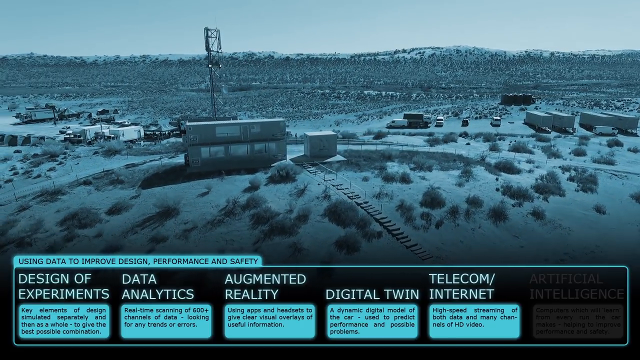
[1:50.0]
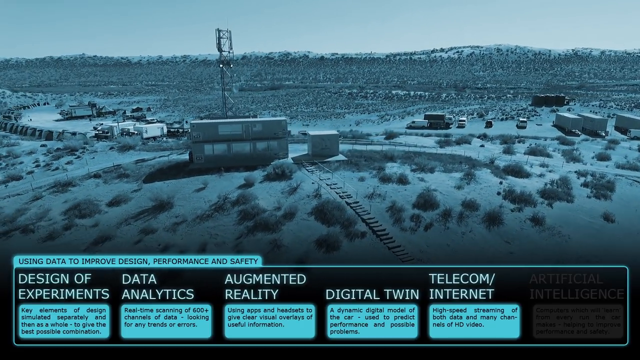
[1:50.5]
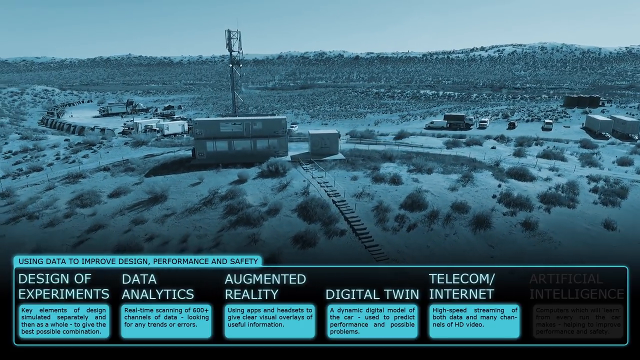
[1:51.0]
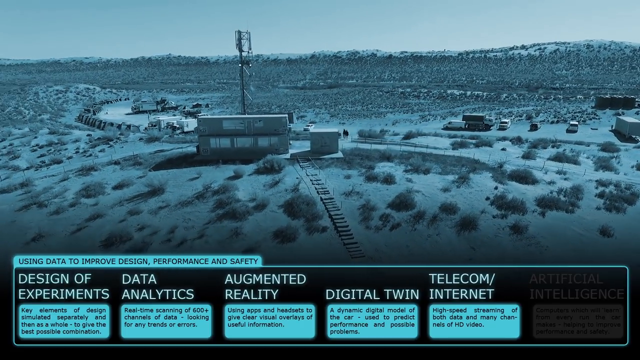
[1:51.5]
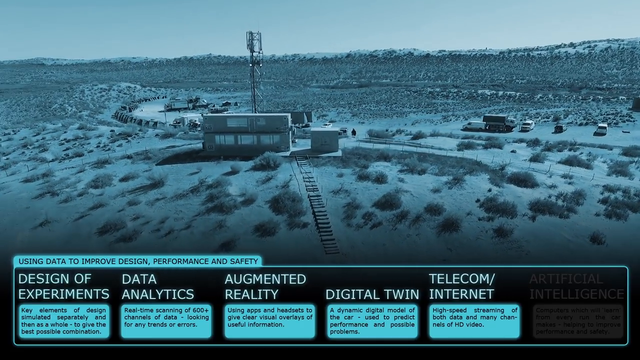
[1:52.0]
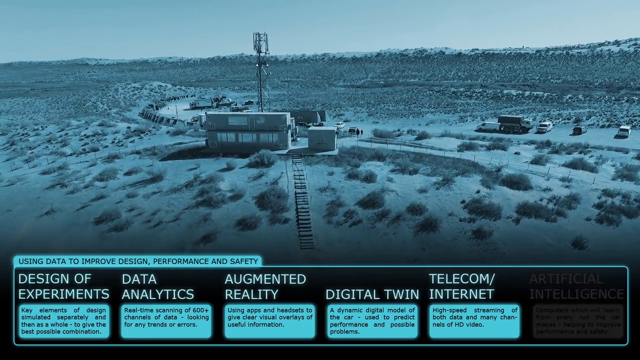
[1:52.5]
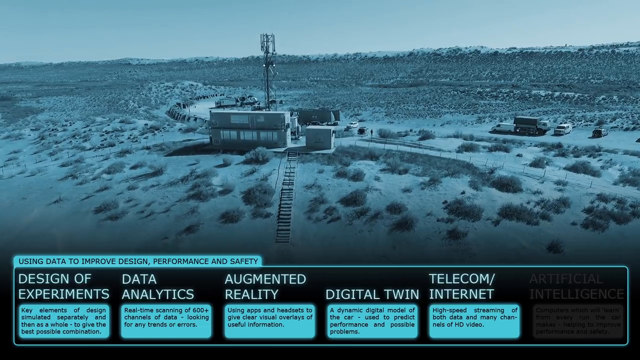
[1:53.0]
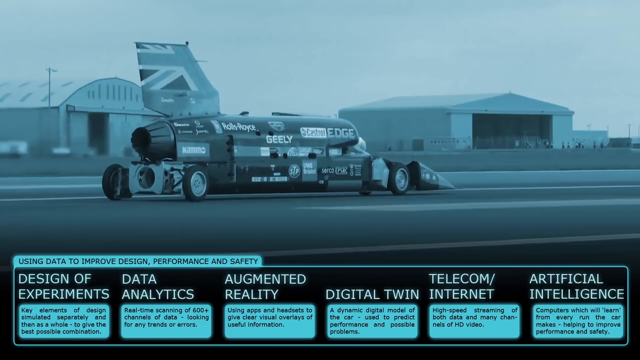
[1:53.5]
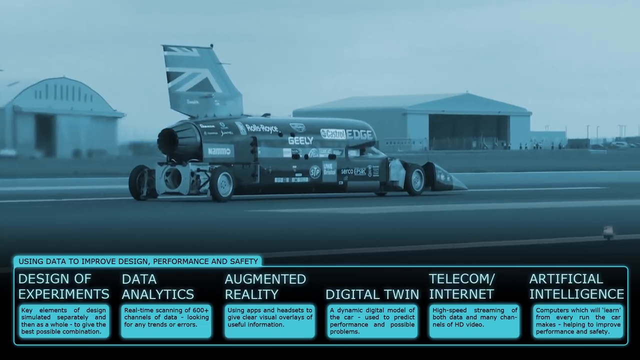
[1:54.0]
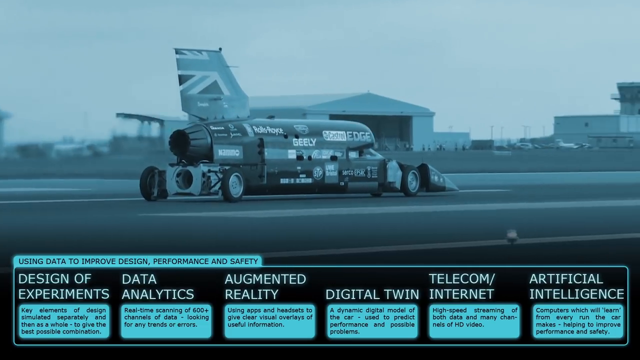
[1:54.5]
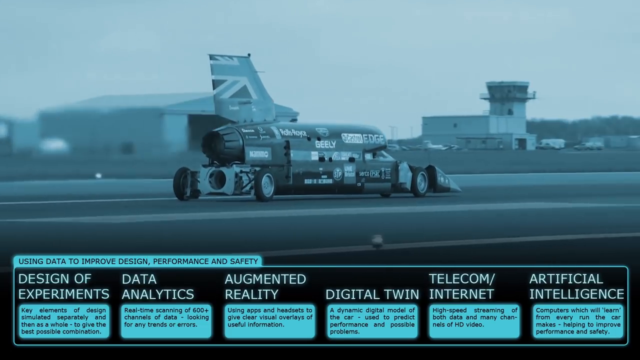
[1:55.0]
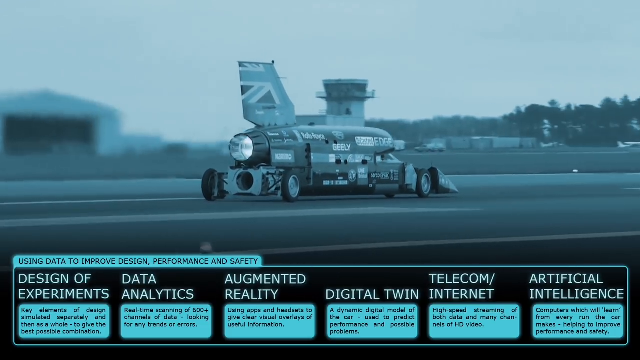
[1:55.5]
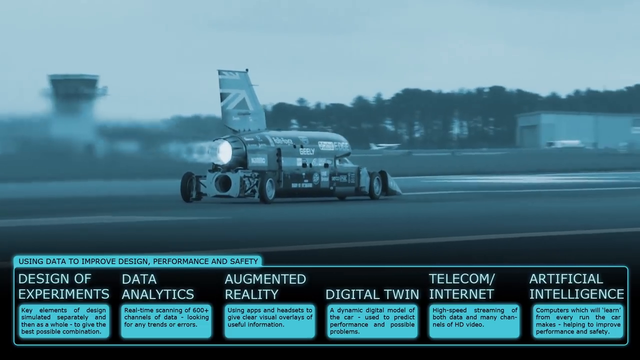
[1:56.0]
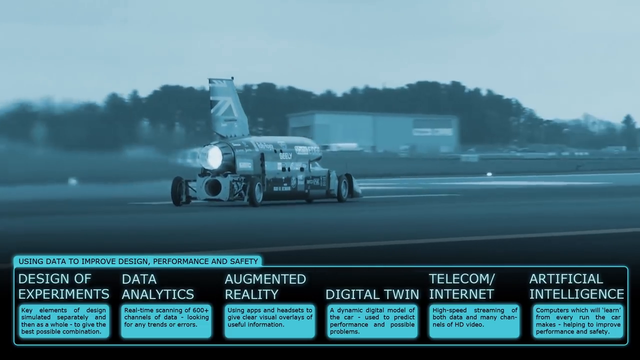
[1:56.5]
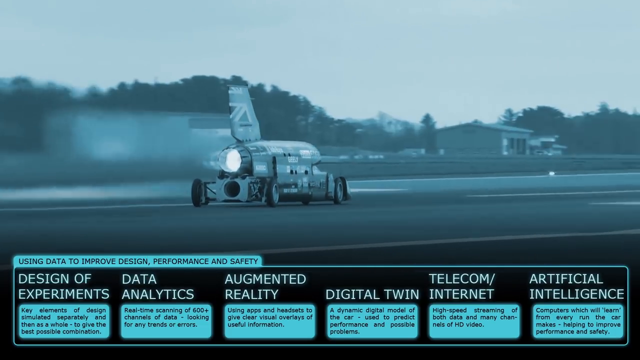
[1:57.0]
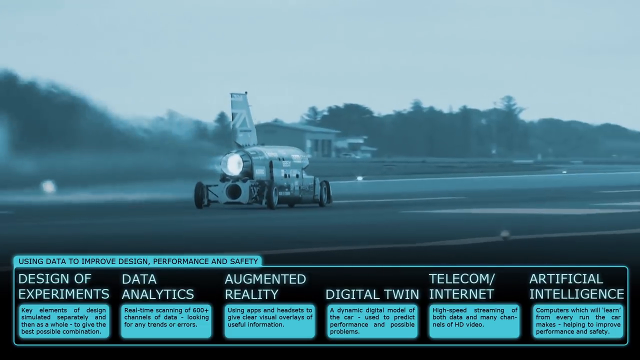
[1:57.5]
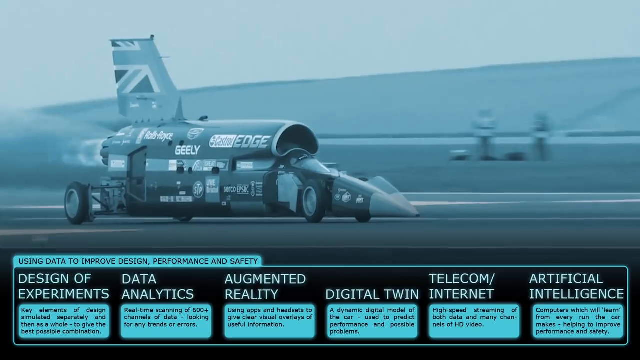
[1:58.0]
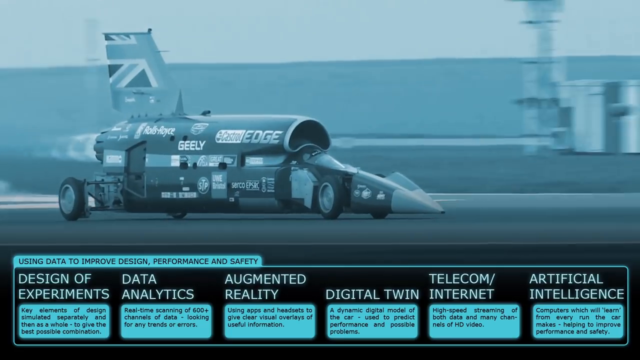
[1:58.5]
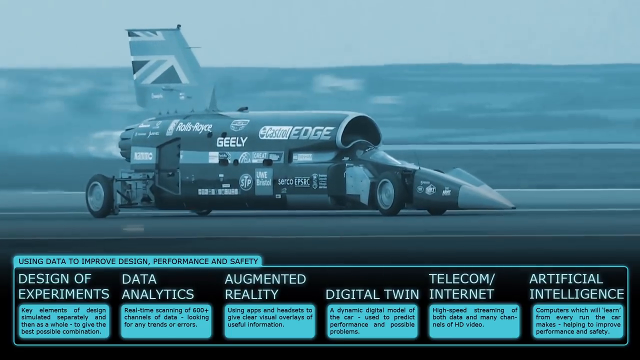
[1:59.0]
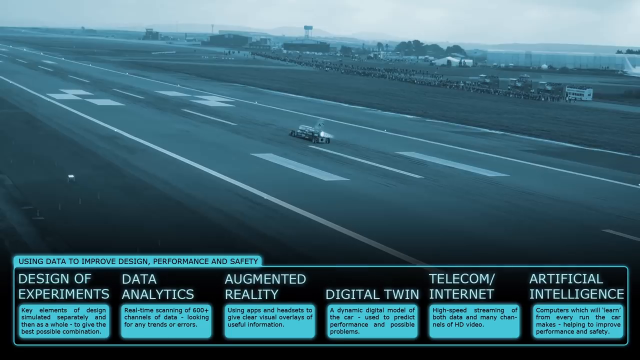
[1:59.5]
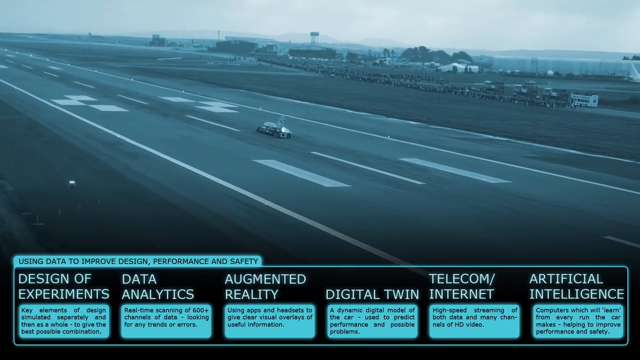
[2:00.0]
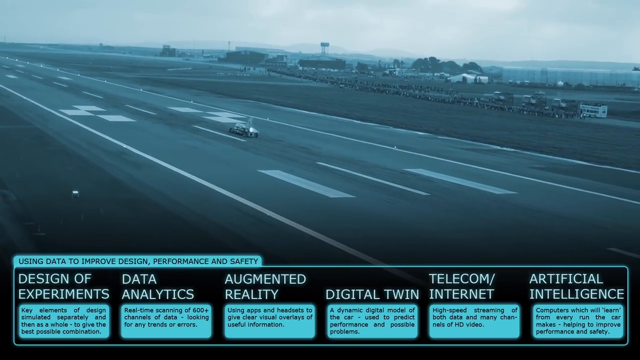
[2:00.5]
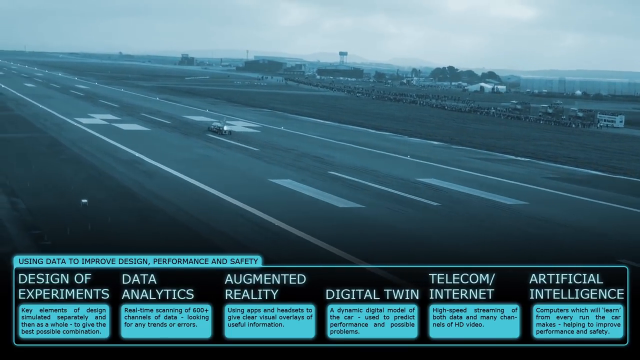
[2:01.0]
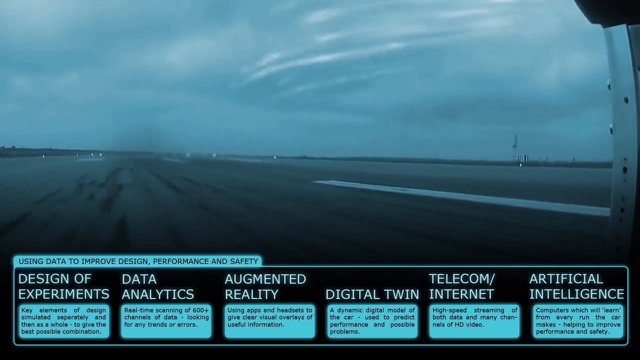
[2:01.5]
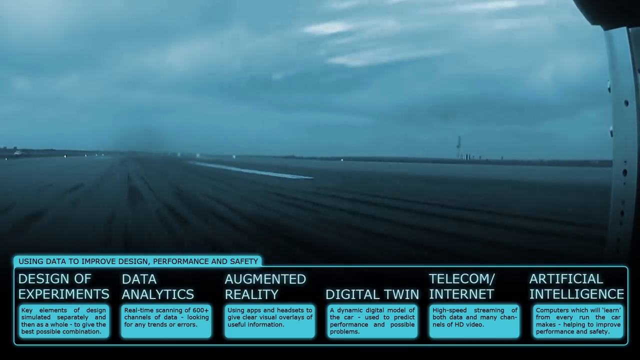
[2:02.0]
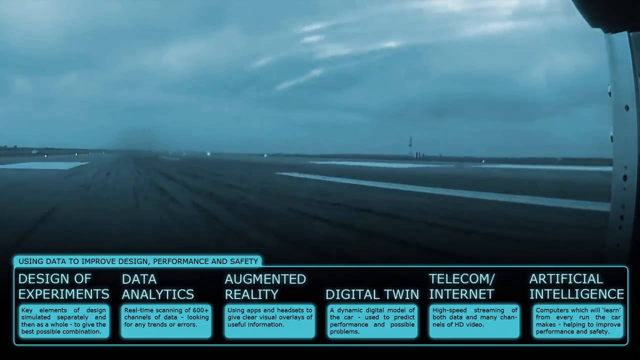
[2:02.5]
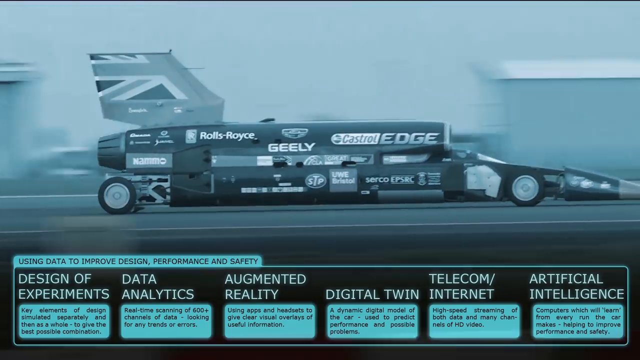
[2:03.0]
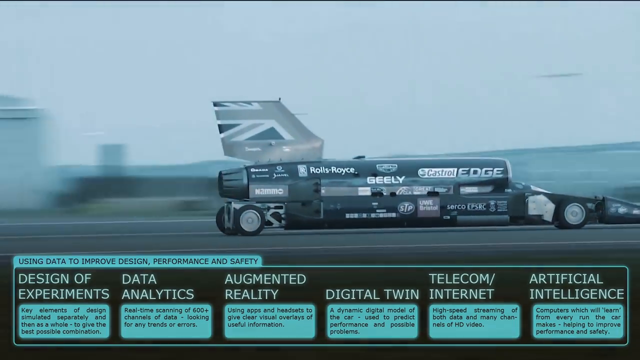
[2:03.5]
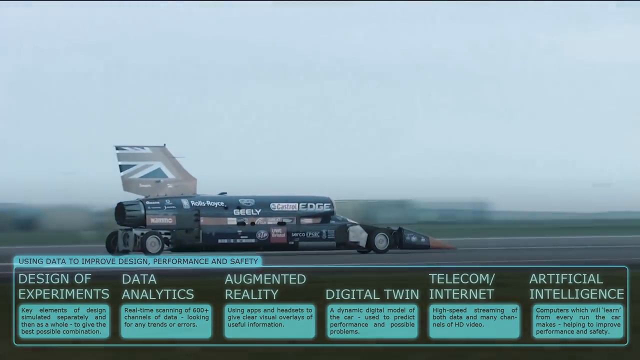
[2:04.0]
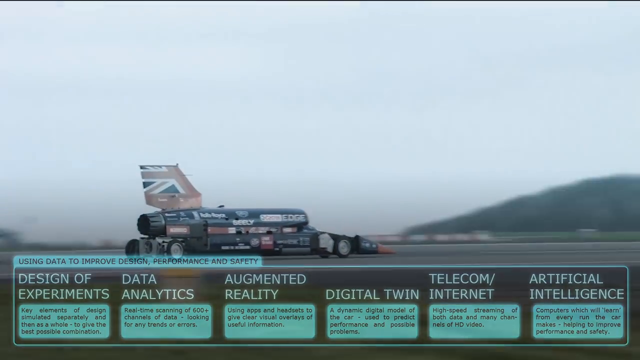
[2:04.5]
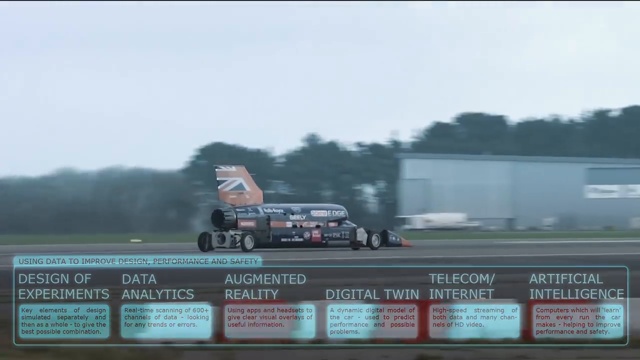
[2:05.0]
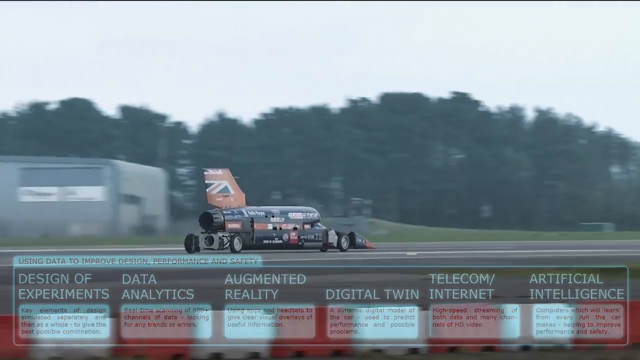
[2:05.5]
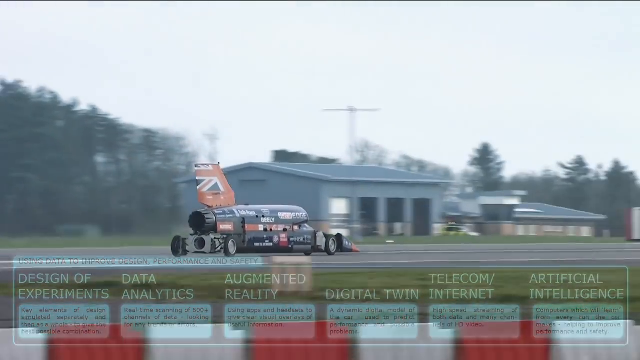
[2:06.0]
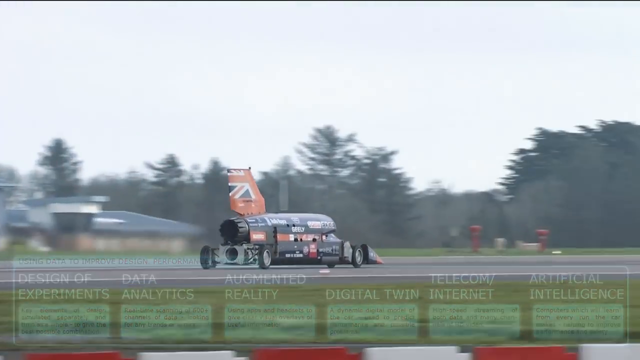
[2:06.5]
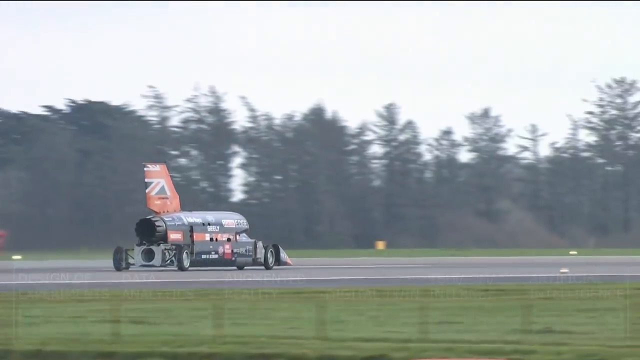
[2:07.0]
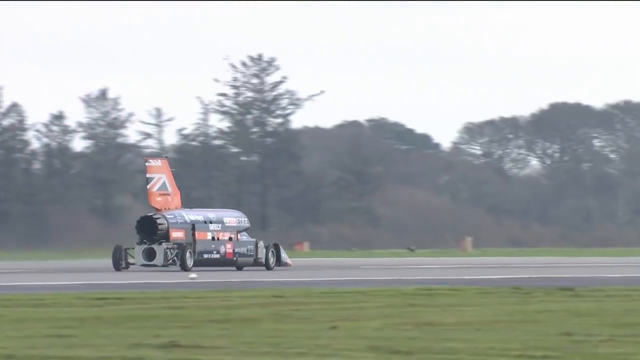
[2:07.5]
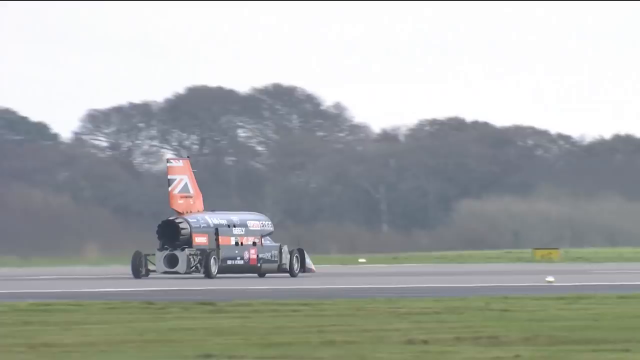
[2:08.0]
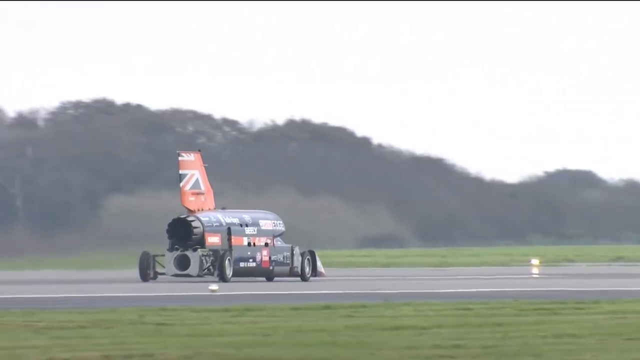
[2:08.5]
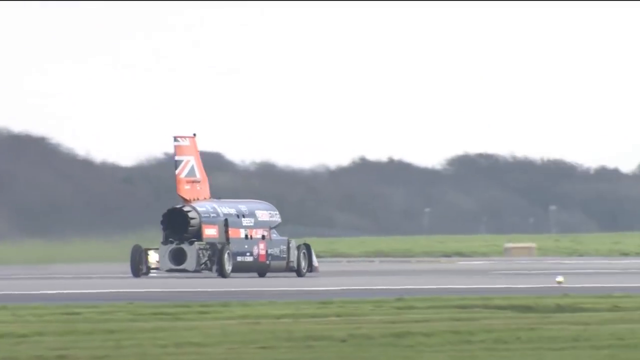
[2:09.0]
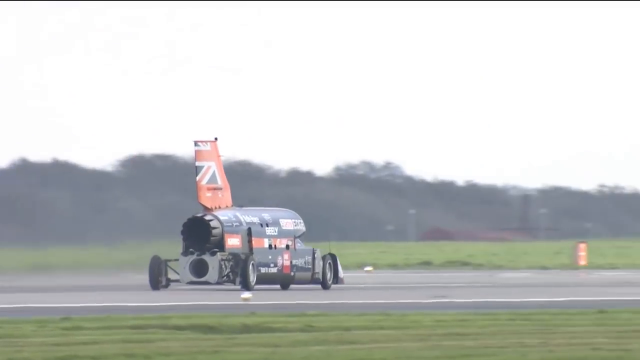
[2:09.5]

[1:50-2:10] A very blue-gray image pans clockwise around an outdoor scene in what looks like a desert area, with mountains in the far background and tumbleweed-type vegetation. There is one building with a larger antenna sticking up, several vehicles that may be 18-wheelers or just trailers parked, and several parked cars. What may be train tracks are visible, but no roads and no people are in sight. The view pans to a still blue-gray image of a rocket car starting down the racing strip, with what look like plane hangars in the background. The rocket's engine fires, and a cut shows just the back of the engine firing. Another cut shows a more overhead view of the rocket racing down a strip that looks a lot like a plane runway with markings on it. Toward the end, the image changes from blue-gray to normal coloration, showing it is daytime: the rocket car is mostly black with an orange fin, maybe what looks like a flag, and several corporate logos down its side, and large trees and vegetation are off to the side.